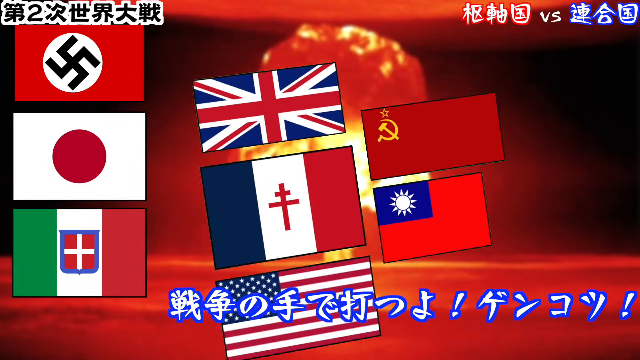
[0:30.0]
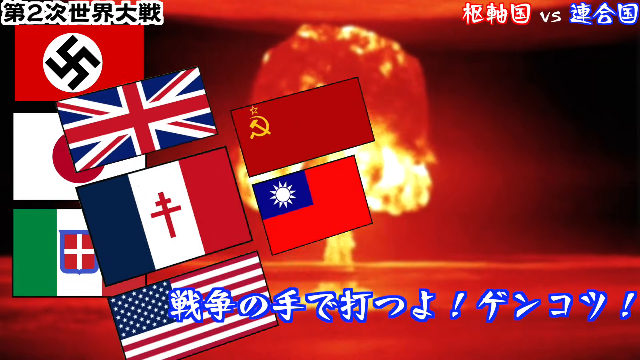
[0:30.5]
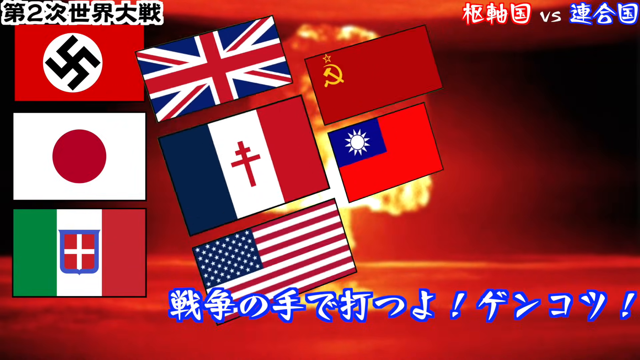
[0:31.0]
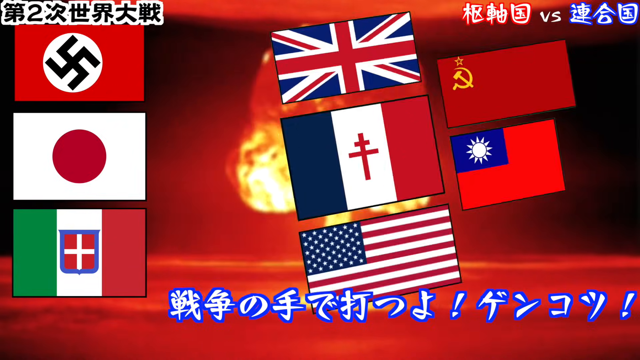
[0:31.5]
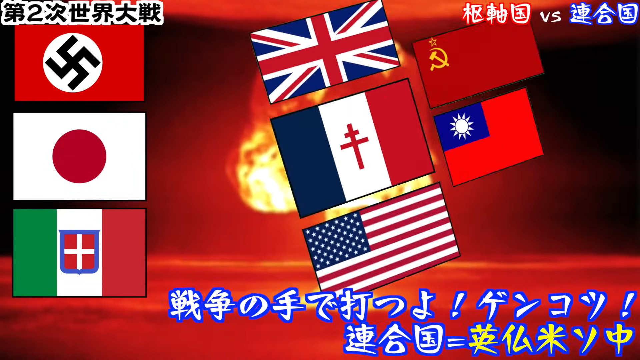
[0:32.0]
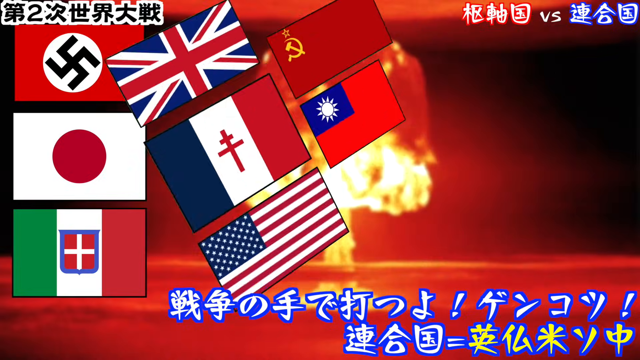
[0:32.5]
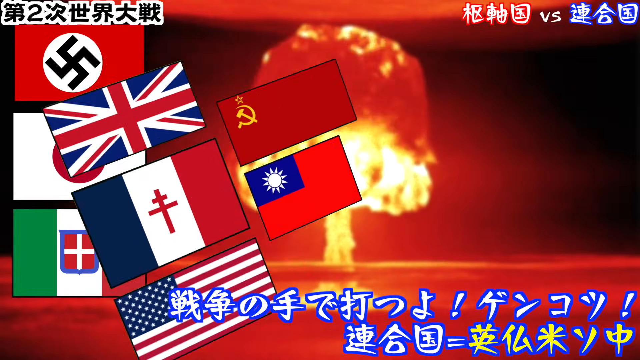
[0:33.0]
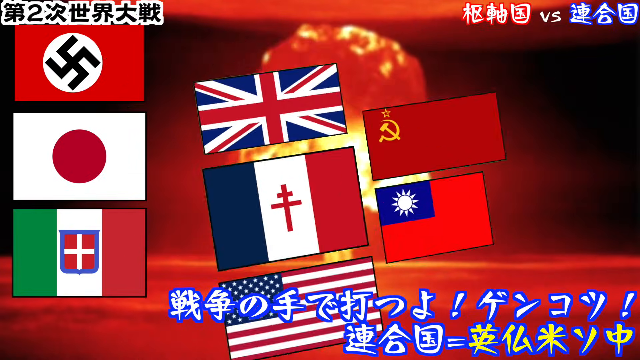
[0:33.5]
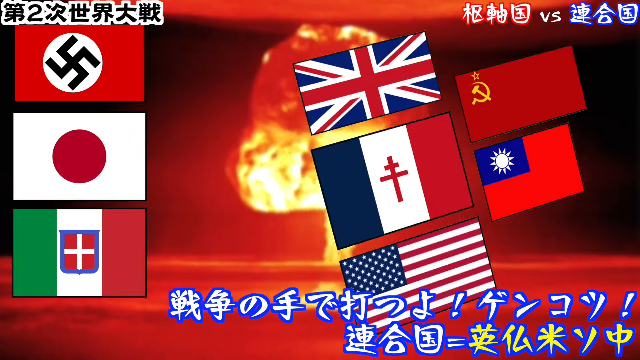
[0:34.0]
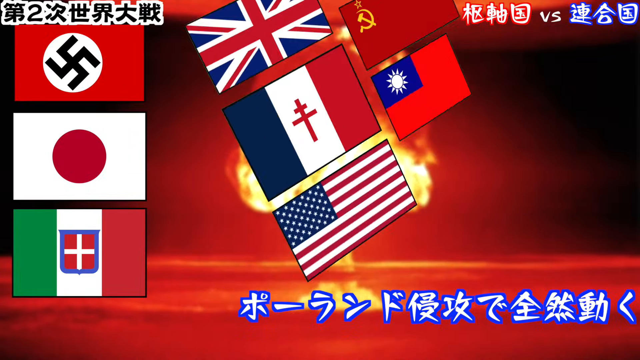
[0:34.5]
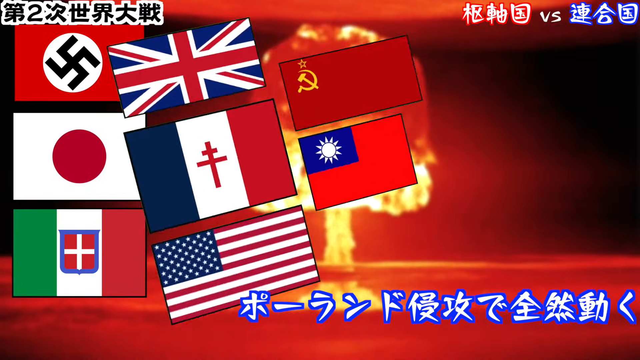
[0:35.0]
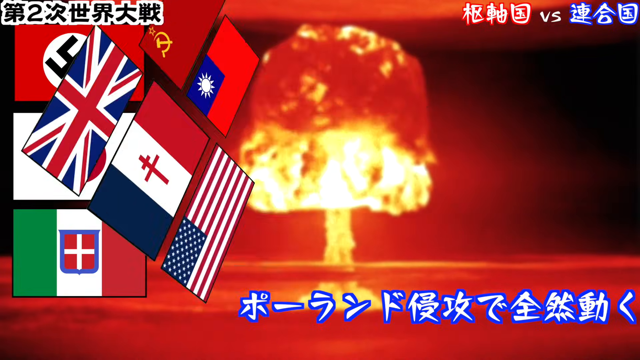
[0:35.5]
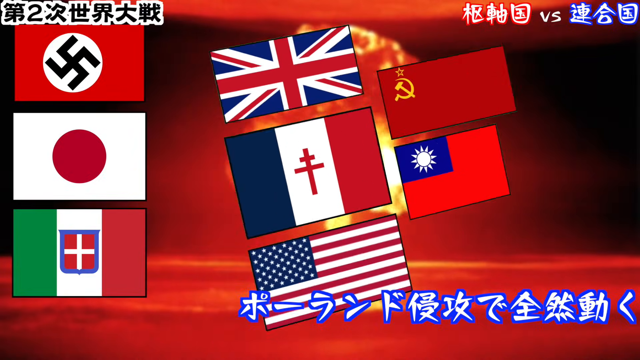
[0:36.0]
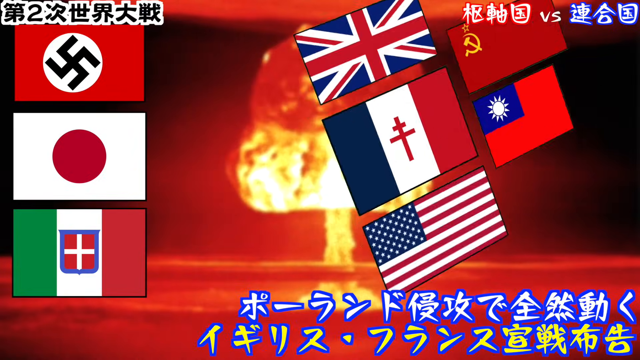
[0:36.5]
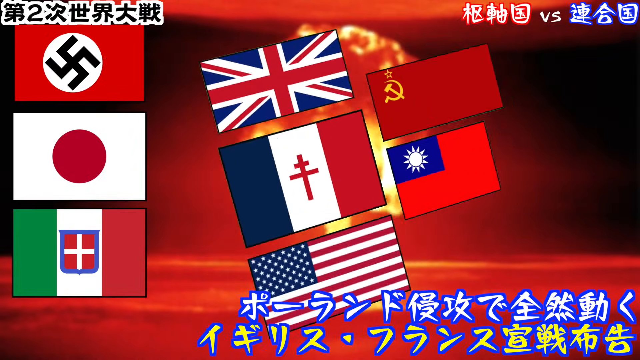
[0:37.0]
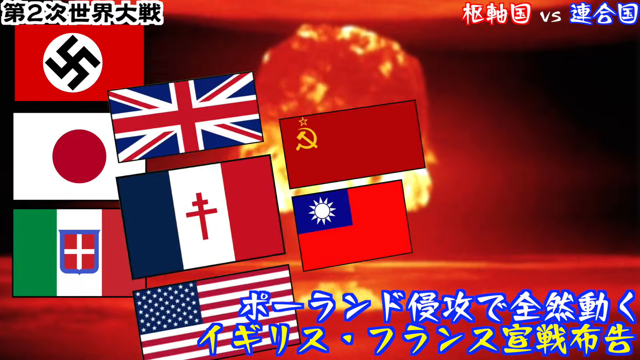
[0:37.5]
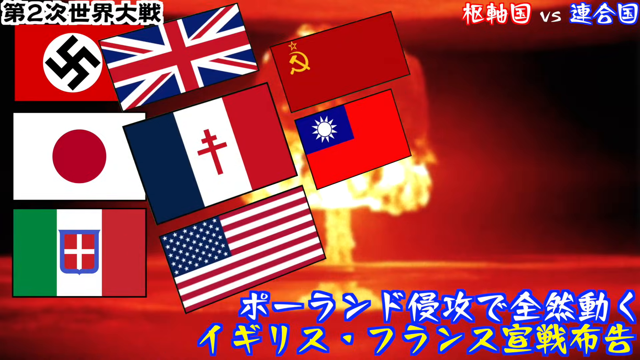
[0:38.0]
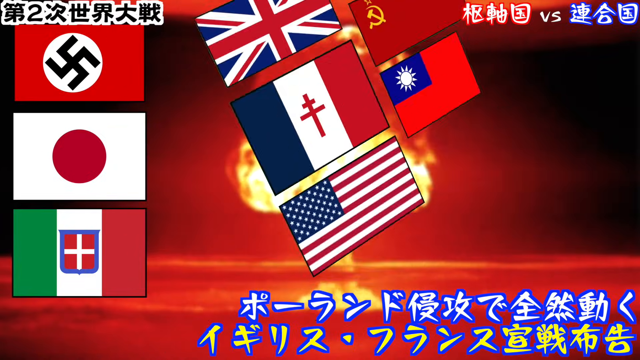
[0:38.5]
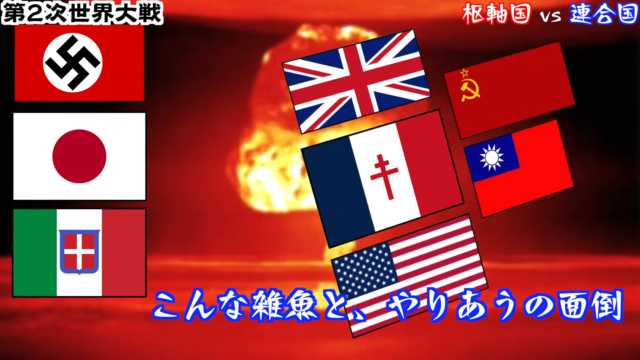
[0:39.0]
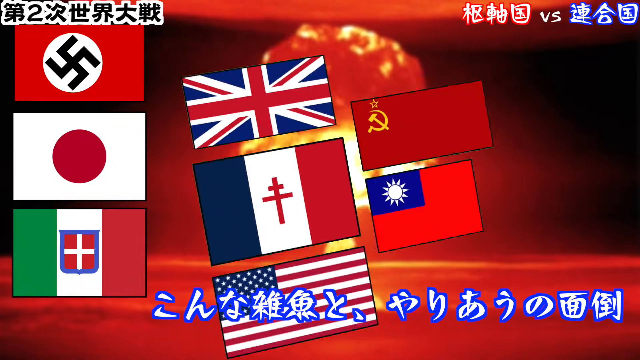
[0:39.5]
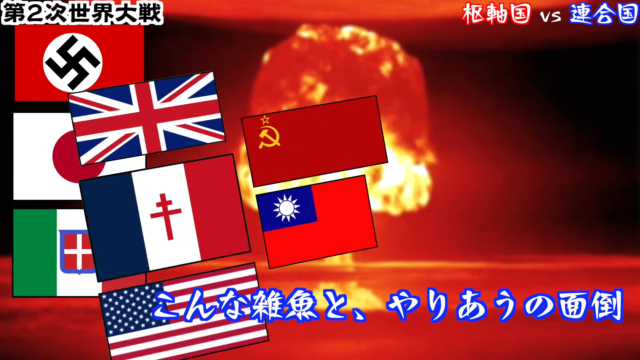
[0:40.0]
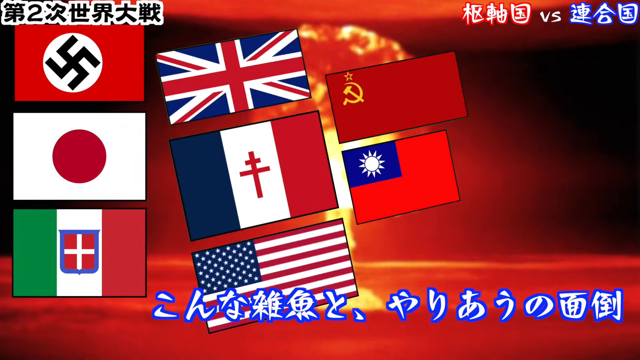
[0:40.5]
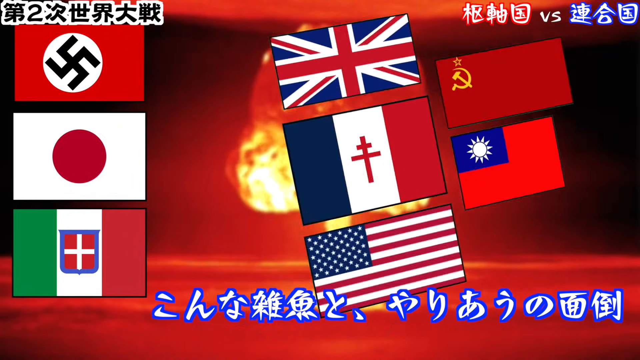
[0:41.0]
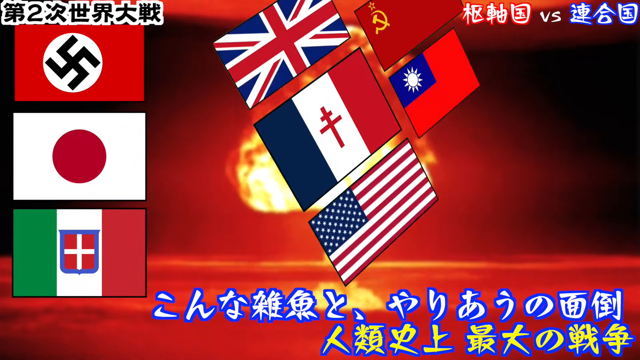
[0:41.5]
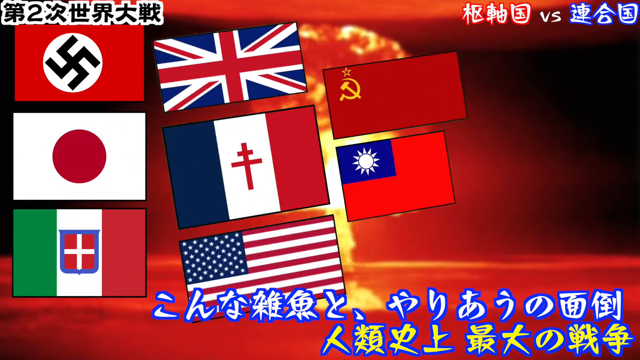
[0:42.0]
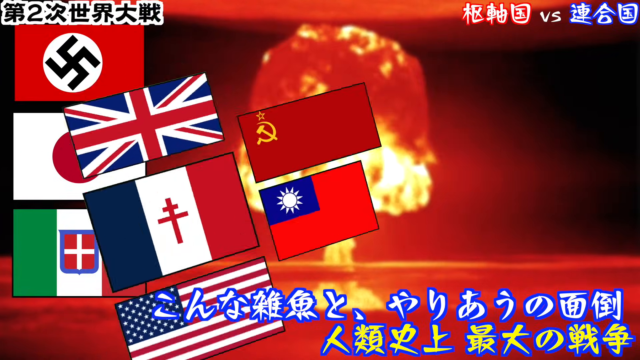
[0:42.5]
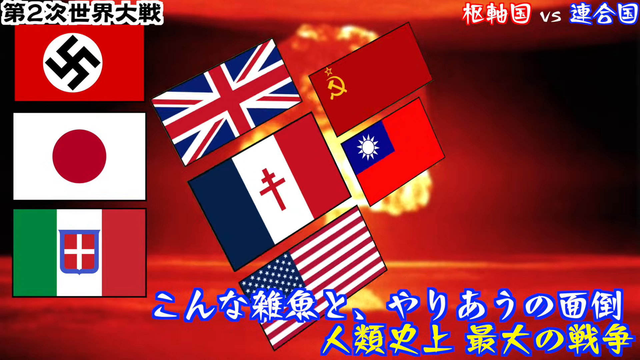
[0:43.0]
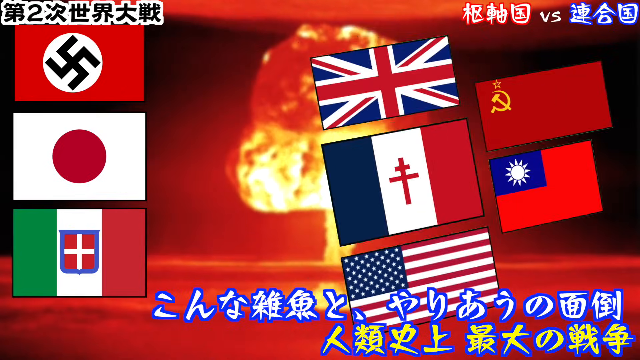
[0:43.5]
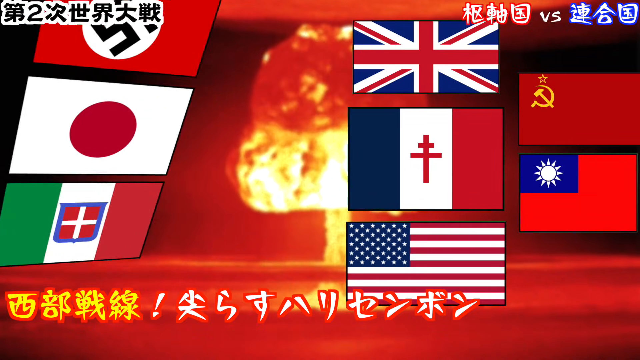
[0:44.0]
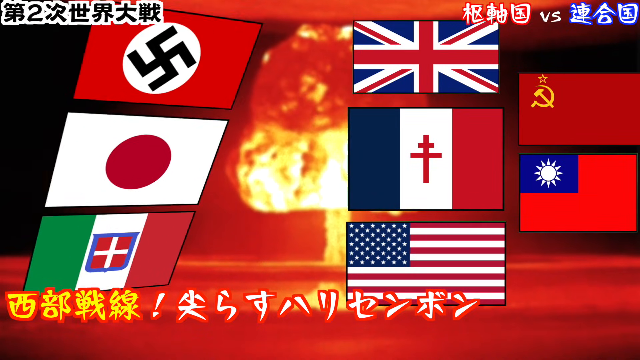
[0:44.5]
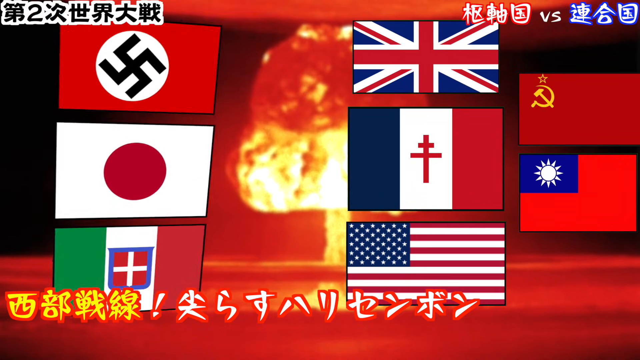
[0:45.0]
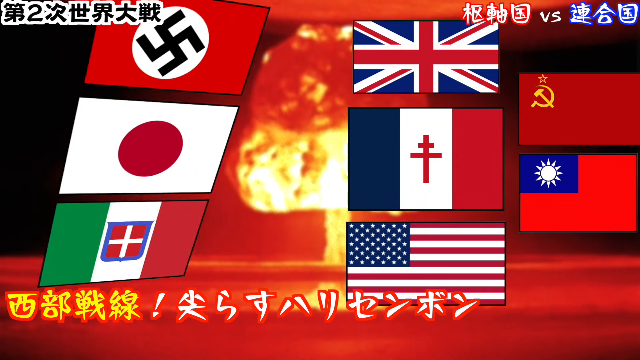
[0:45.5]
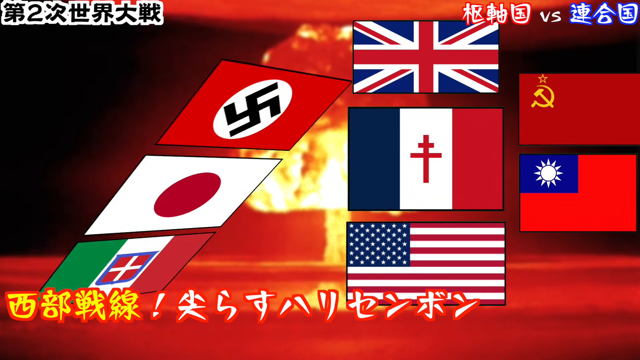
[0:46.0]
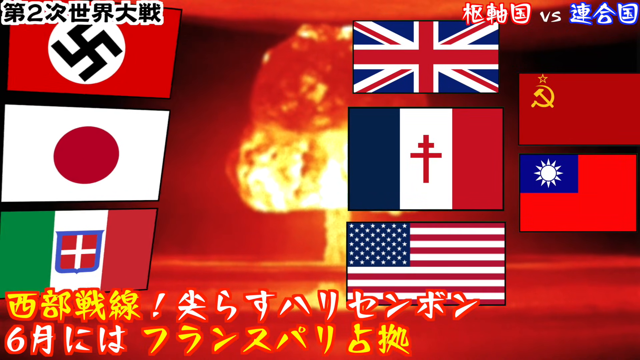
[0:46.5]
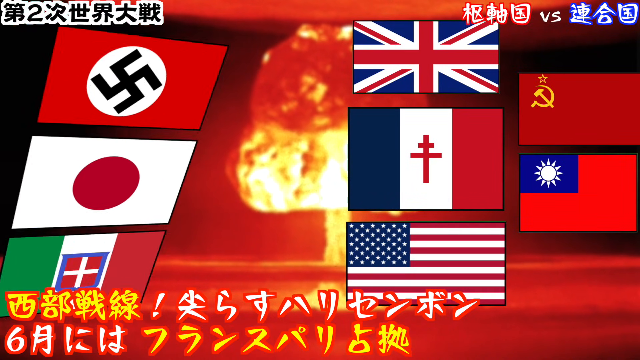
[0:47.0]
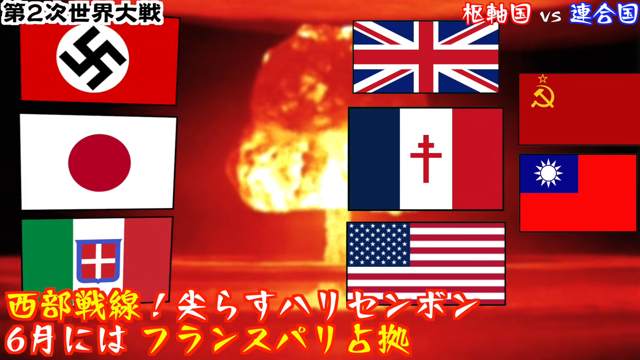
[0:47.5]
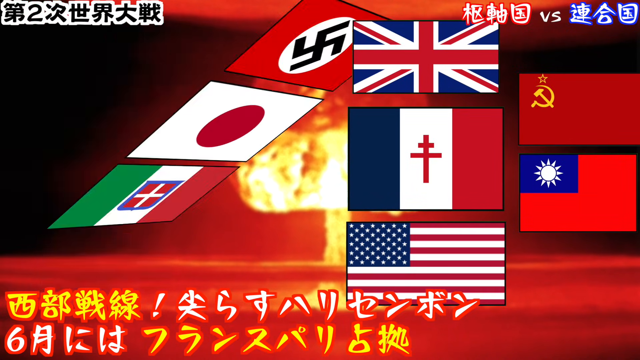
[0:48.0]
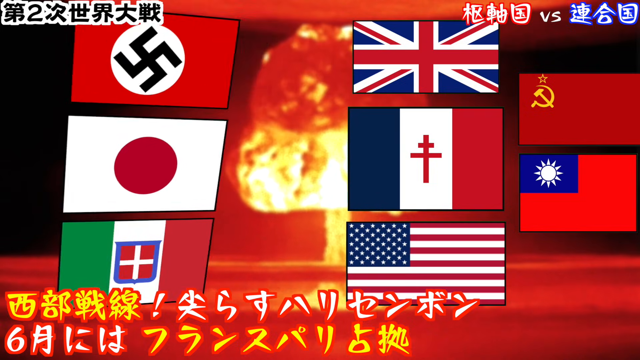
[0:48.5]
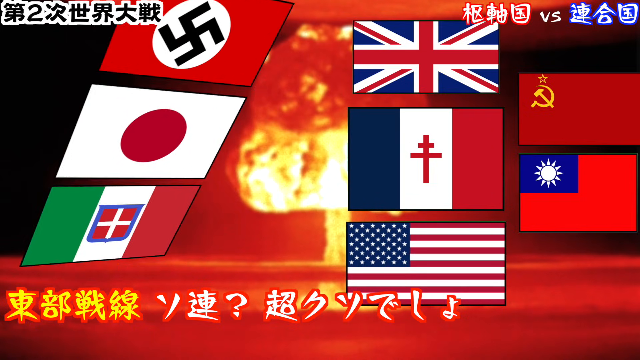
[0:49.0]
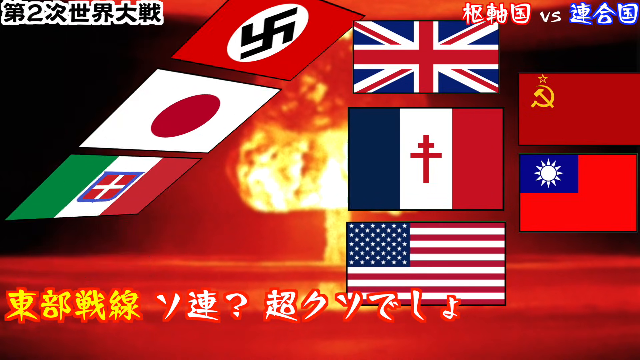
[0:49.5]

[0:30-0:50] Five flags are vibrating, and on the left side there are three flags. When the flags on the right side stop vibrating, the flag on the left side starts. The flags apparently are divided into two parts that vibrate differently. Some written information also appears, which seems to be in Chinese or something similar rather than English.